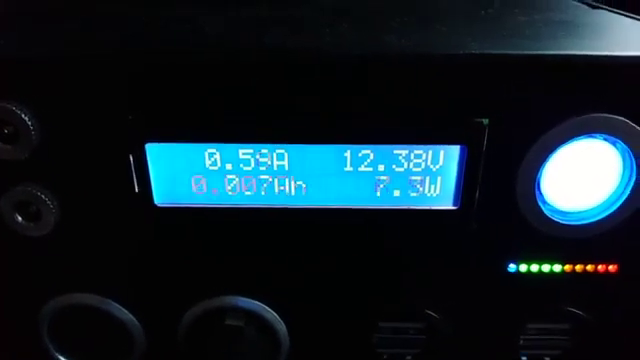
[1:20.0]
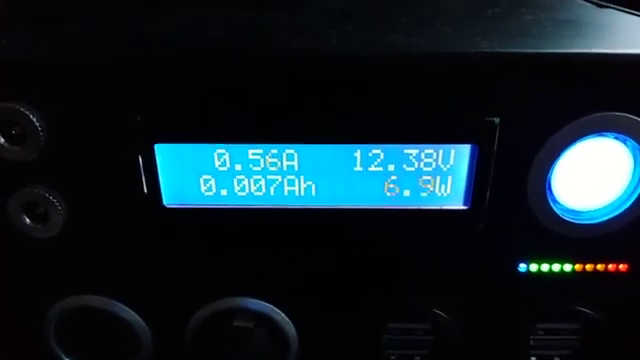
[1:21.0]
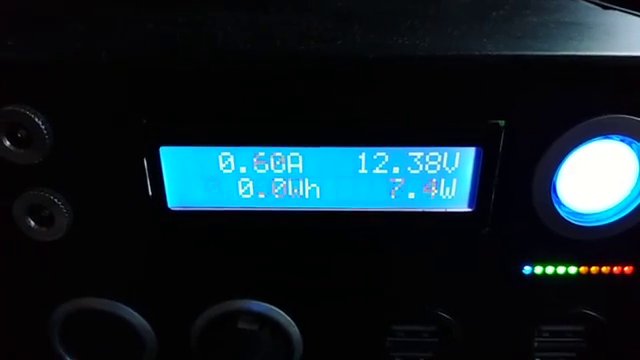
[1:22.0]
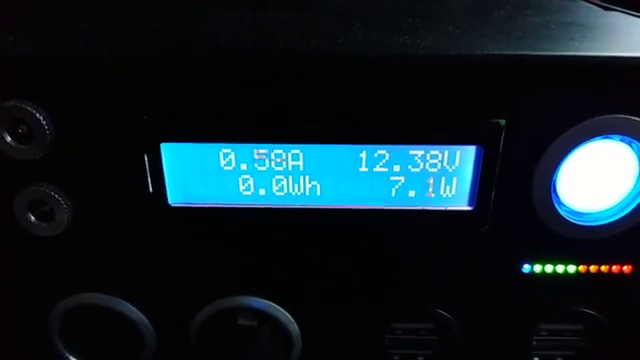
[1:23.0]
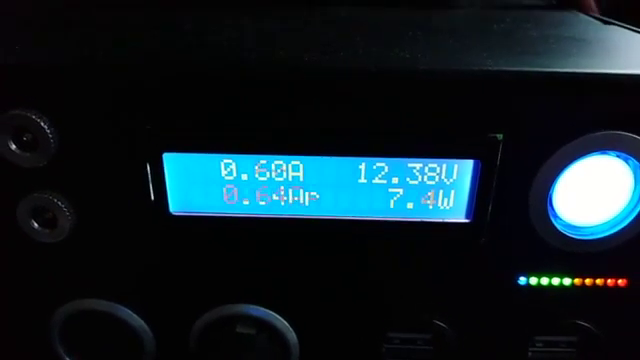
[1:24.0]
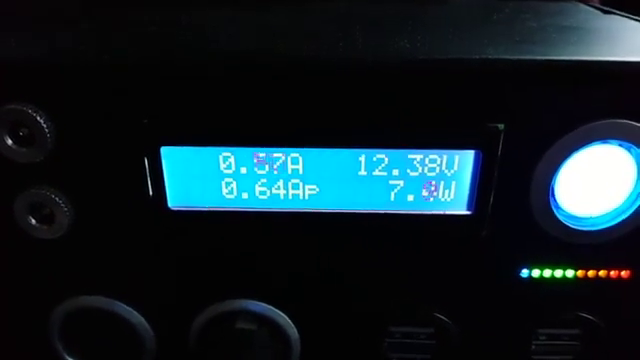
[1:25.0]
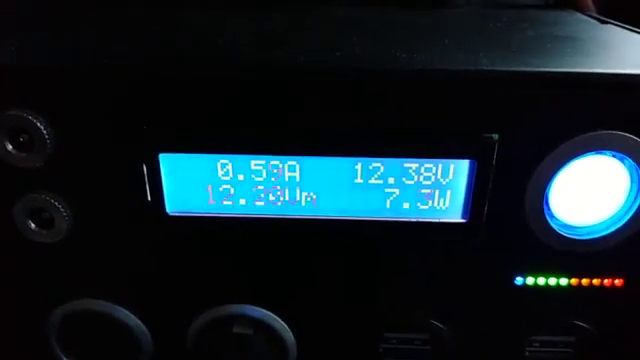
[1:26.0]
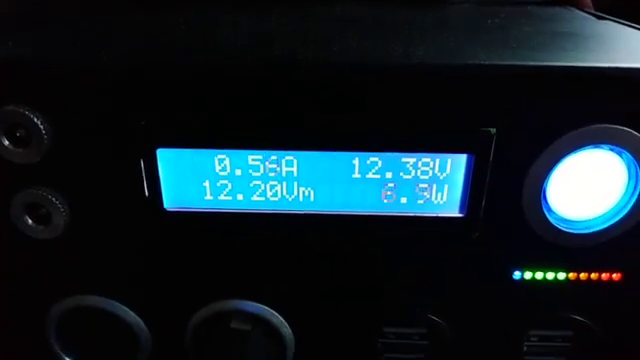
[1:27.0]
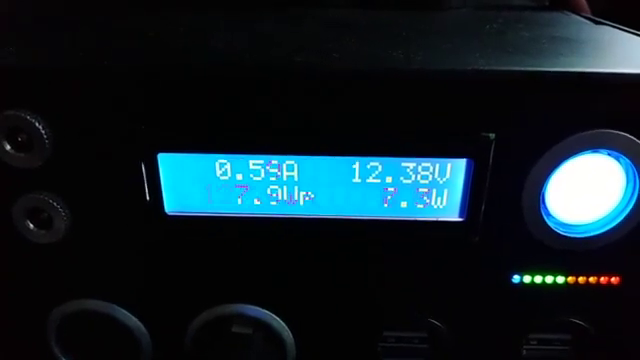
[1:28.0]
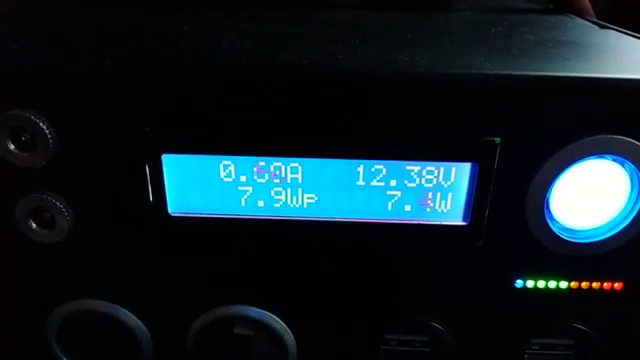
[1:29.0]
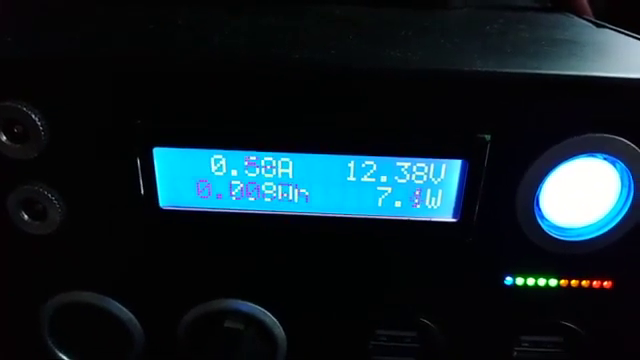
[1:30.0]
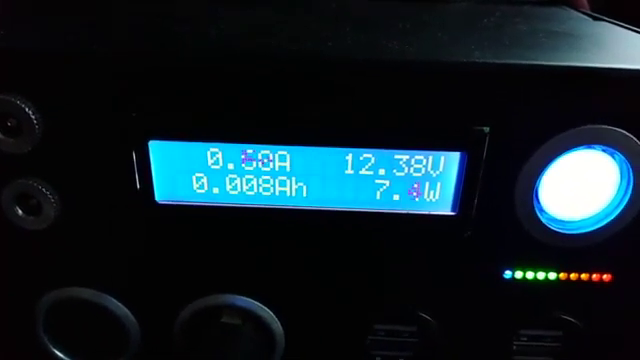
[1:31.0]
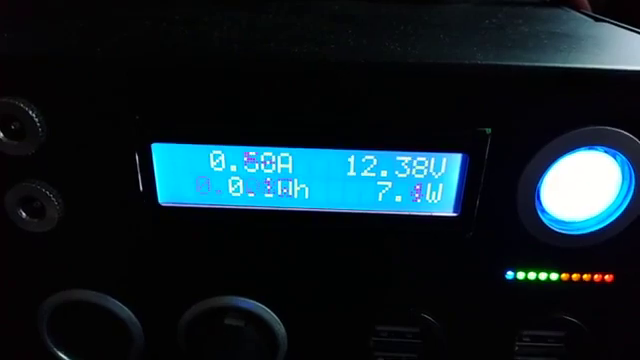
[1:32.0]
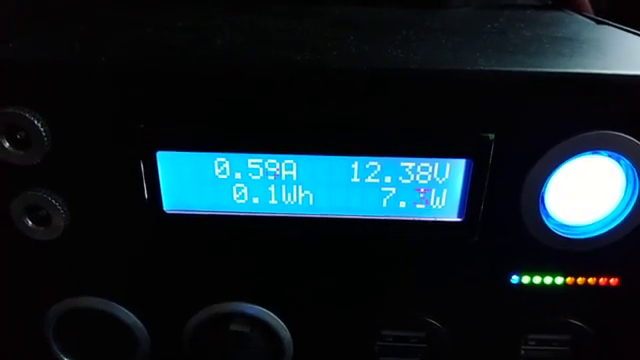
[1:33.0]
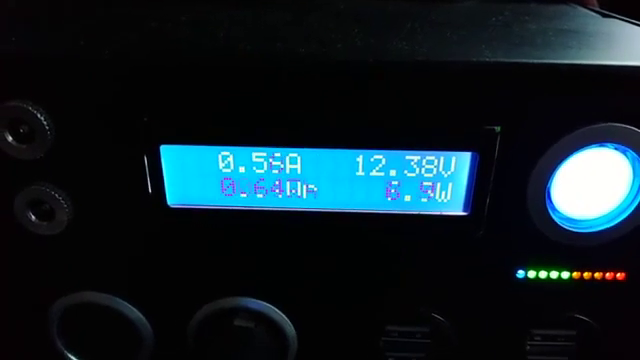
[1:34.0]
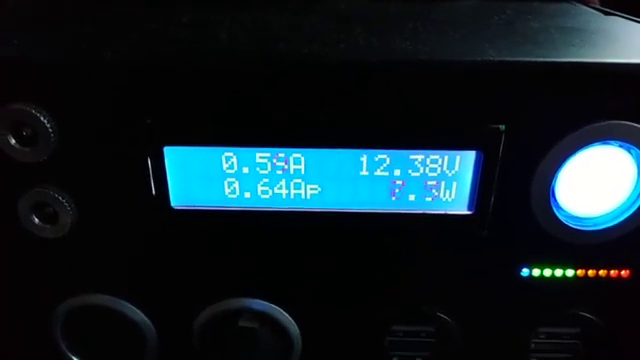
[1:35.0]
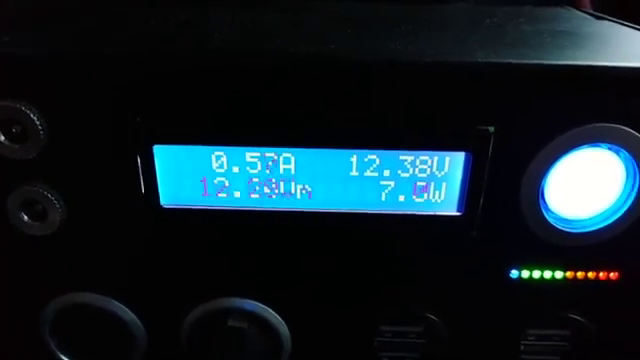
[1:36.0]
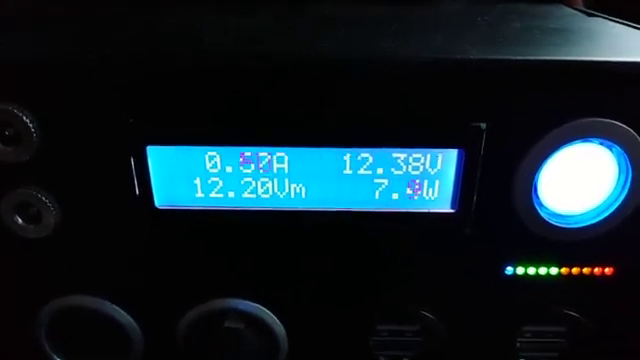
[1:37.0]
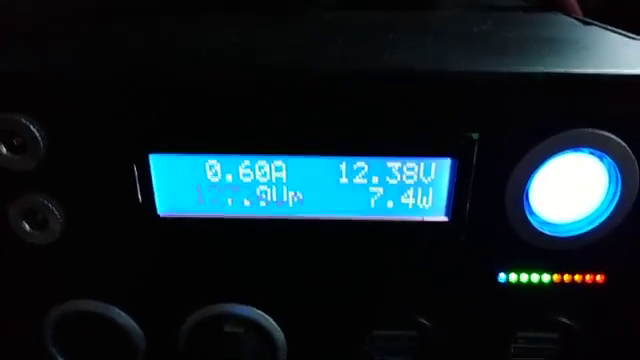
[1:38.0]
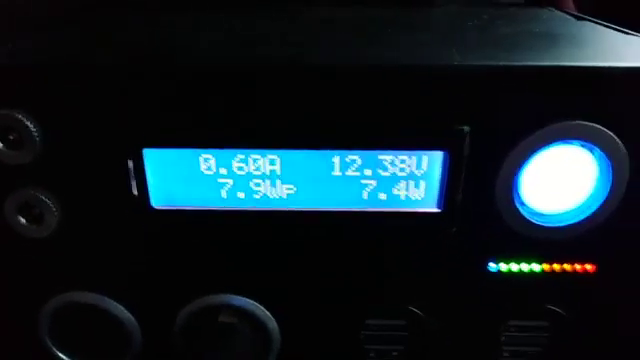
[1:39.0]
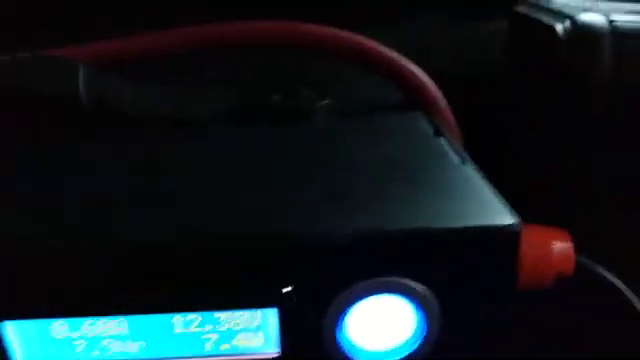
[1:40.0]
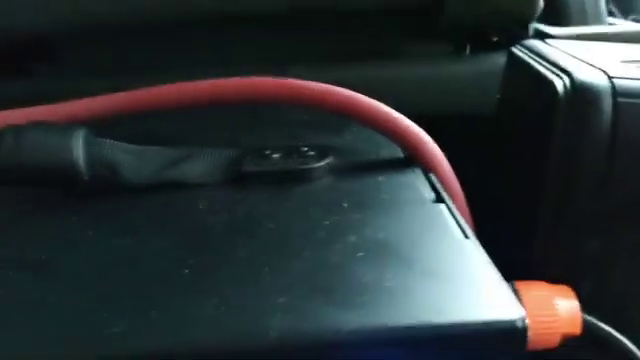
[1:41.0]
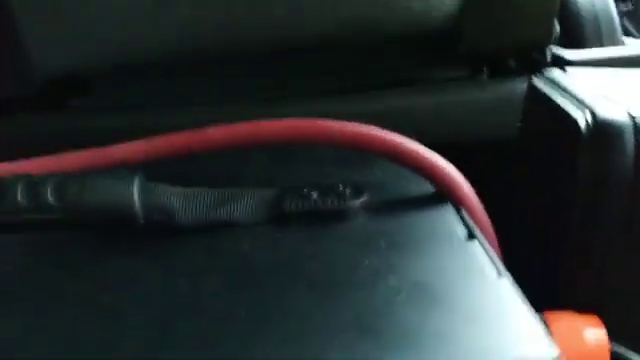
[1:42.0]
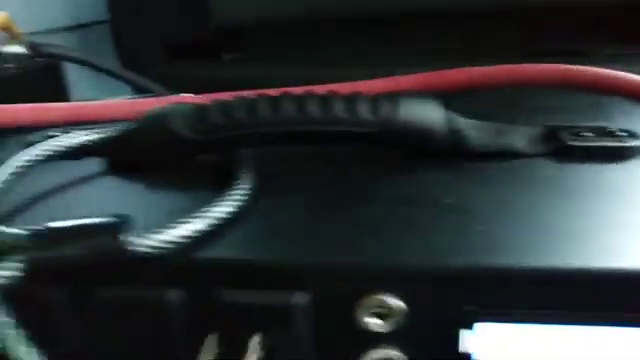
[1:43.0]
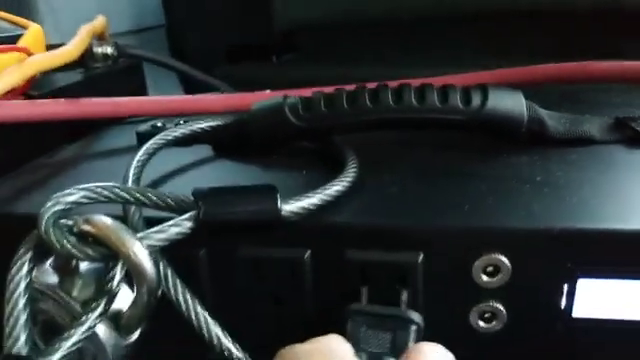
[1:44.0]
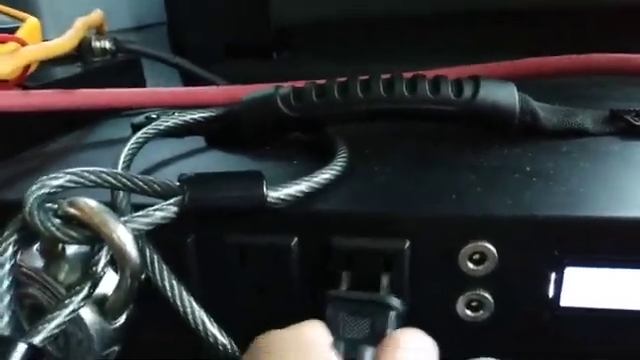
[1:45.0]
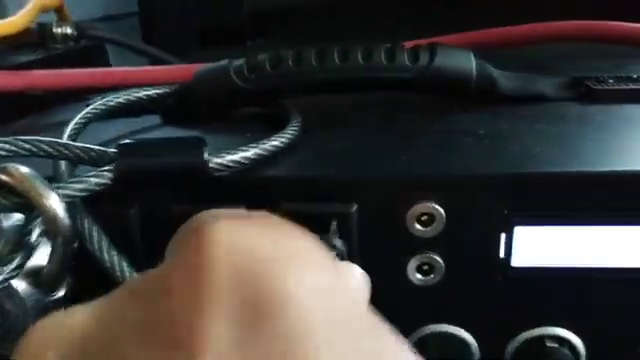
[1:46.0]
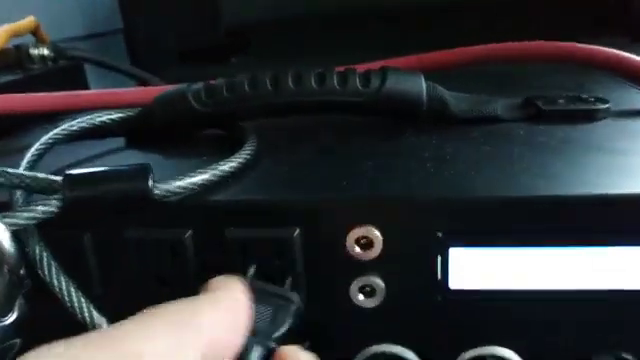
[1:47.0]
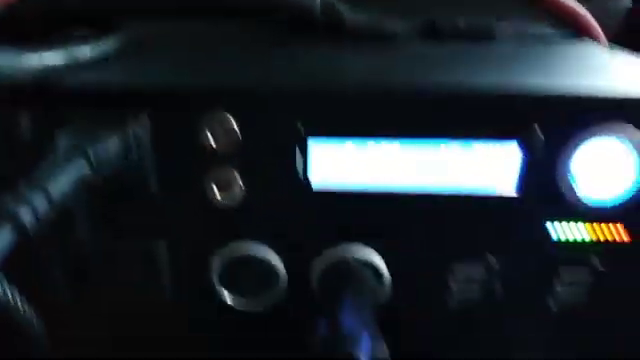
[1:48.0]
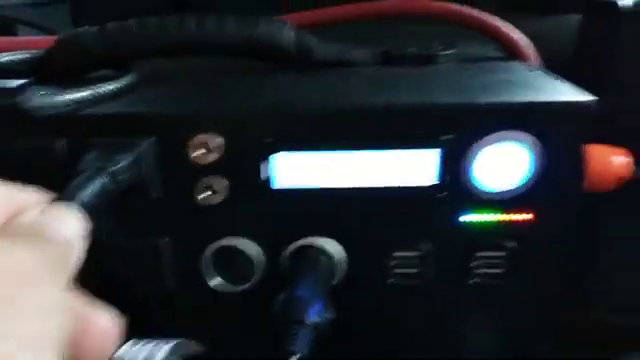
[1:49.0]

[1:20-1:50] The same digital interface is shown: a long rectangular green screen with changing white electronic numbers. The view moves up, revealing a red wire running across the top, and on the right-hand side a hand plugs an ordinary cord, like an alarm clock cord, into a socket. With the whole unit visible, it looks like a battery charger or charger of some kind, and the red cord looks like a cable. The person is possibly plugging in a device.